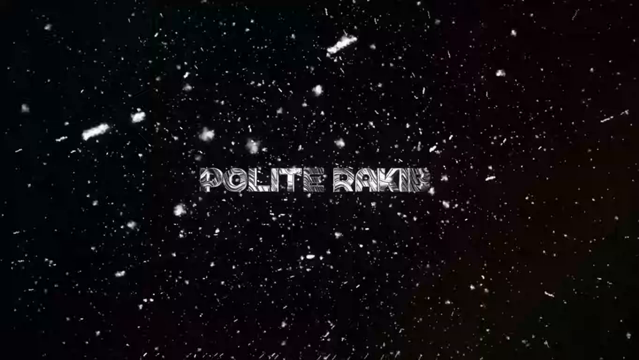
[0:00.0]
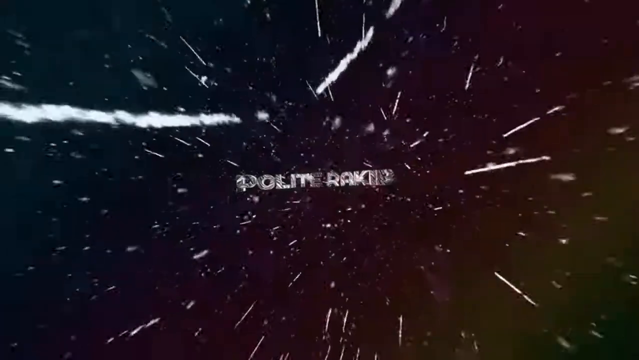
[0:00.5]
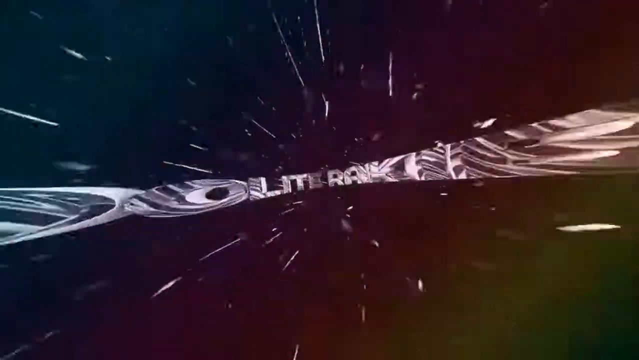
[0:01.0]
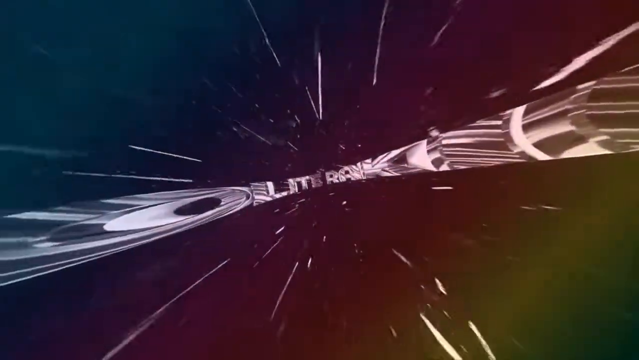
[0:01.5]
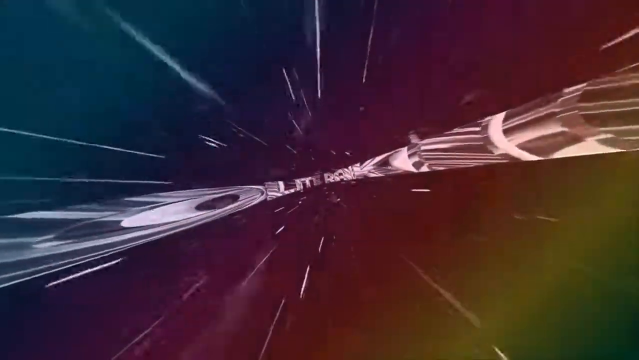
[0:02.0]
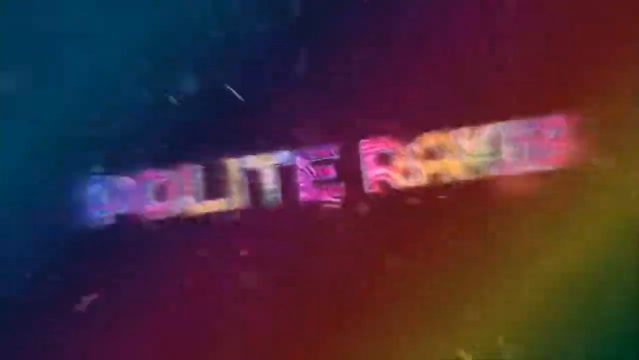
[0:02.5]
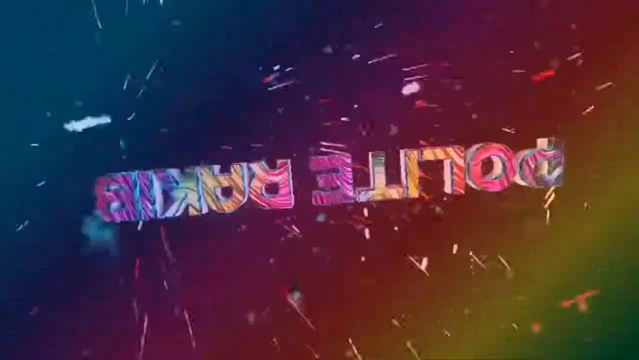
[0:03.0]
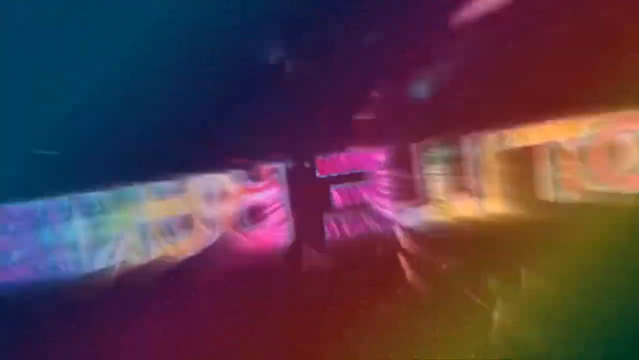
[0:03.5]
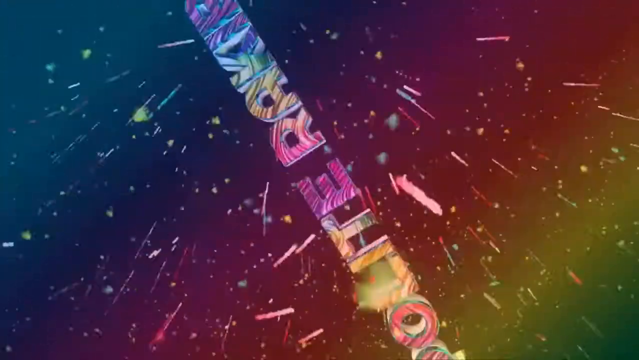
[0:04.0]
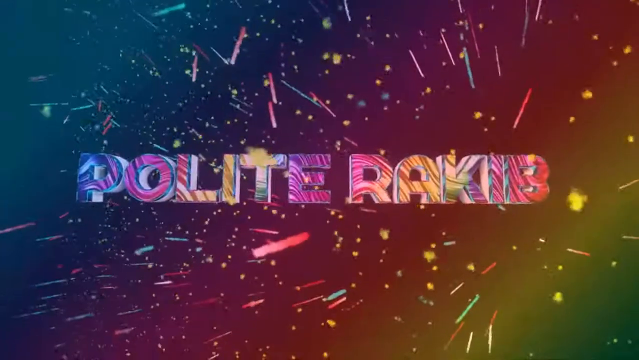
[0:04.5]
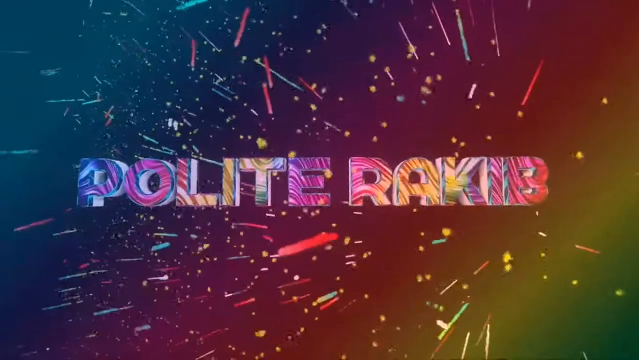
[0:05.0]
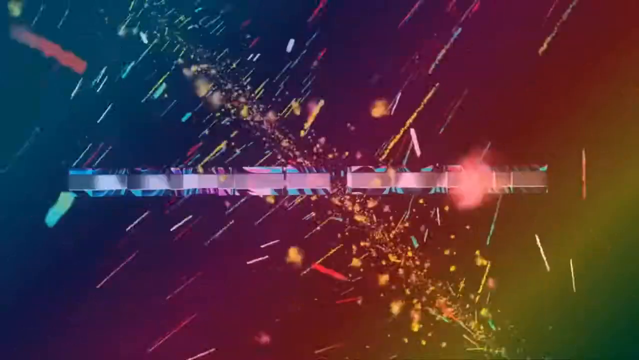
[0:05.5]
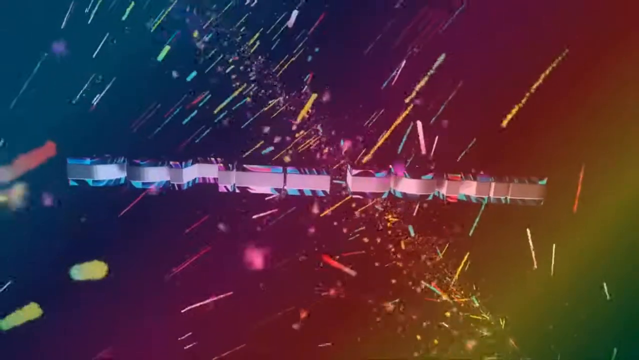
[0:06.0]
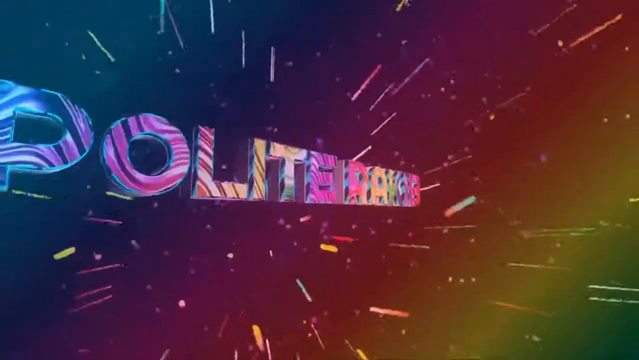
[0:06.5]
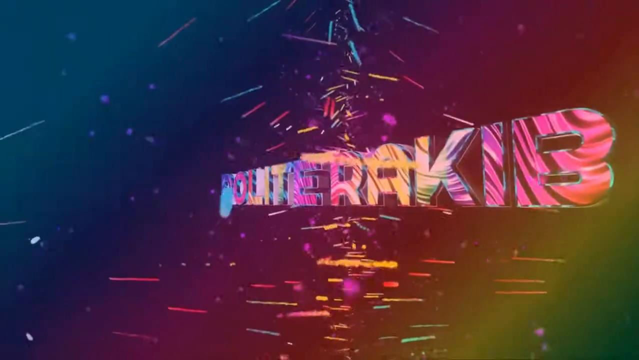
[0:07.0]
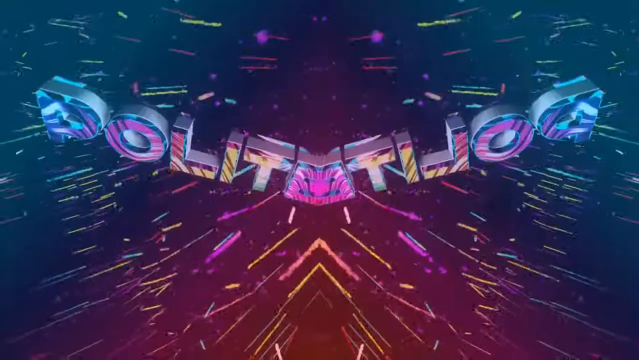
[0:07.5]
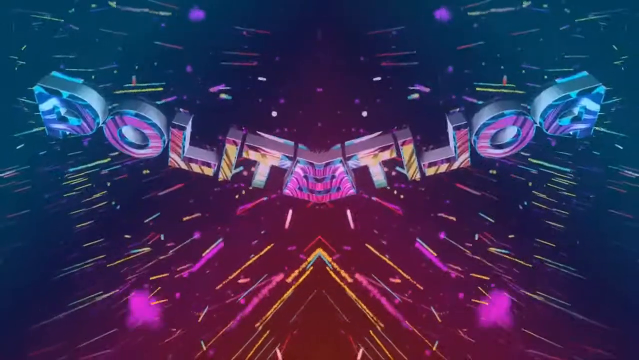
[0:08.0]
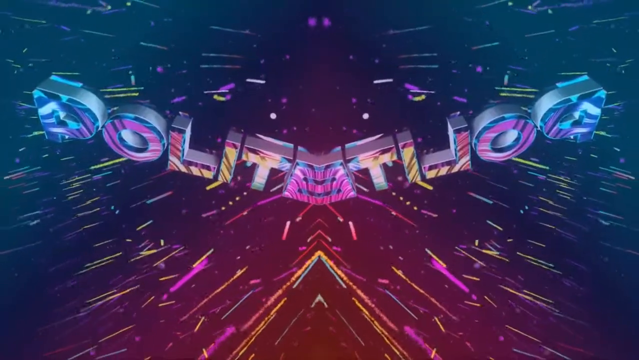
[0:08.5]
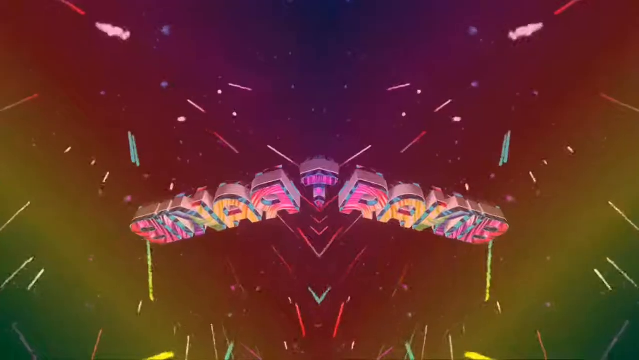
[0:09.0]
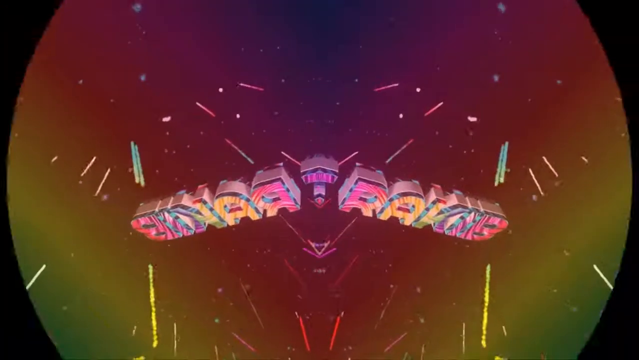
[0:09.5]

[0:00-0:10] Two words appear in the center of the screen, reading "polite" and "rakib". At first they are black and white, and then they become colorful, in blue and purple. The words zoom and stretch toward the viewer, flip upside down, flip sideways, flip upward and rotate, and then they split apart in a distorted way. The background is very colorful: blue on the left side and something like purple and yellow or gold on the right side. Many colorful lines and small dots float around.